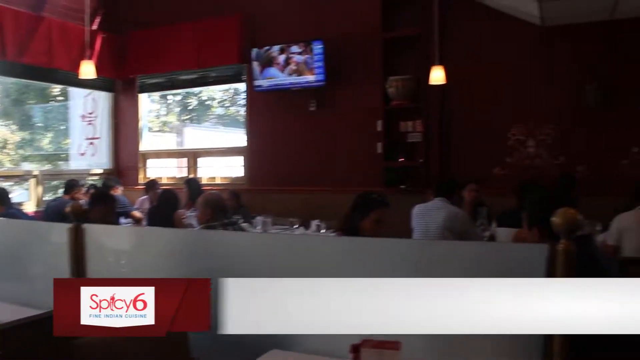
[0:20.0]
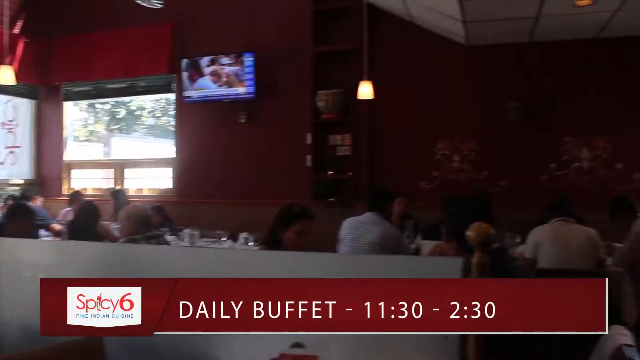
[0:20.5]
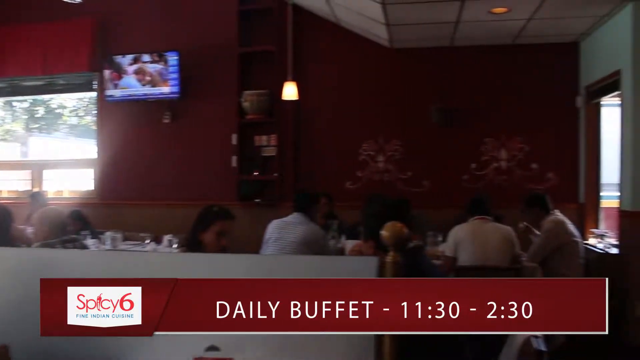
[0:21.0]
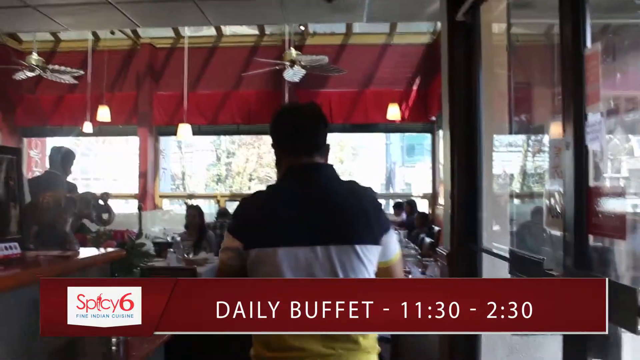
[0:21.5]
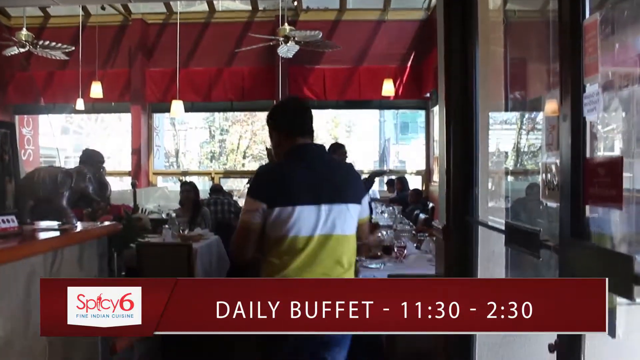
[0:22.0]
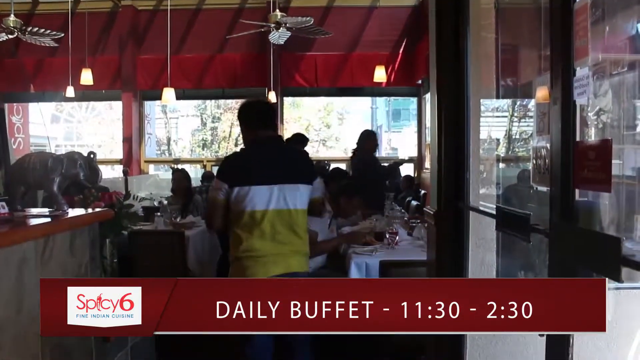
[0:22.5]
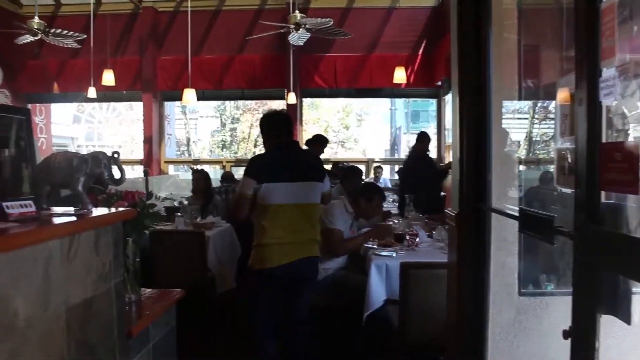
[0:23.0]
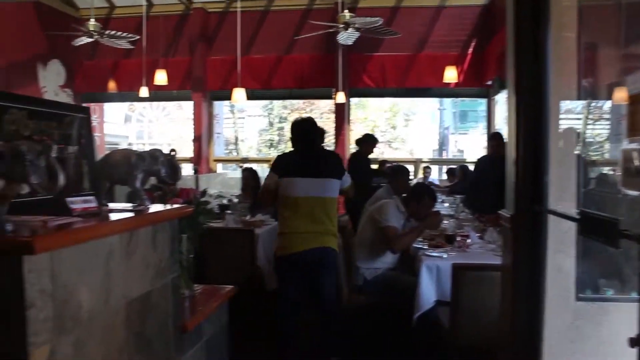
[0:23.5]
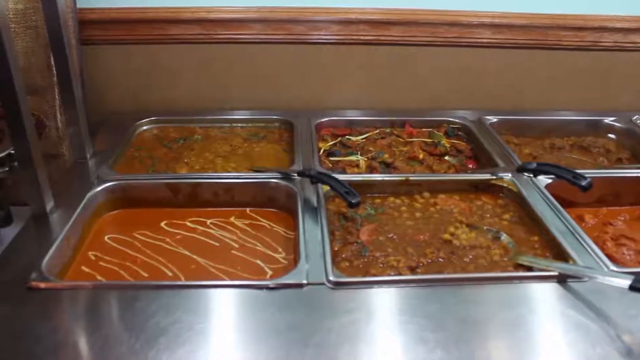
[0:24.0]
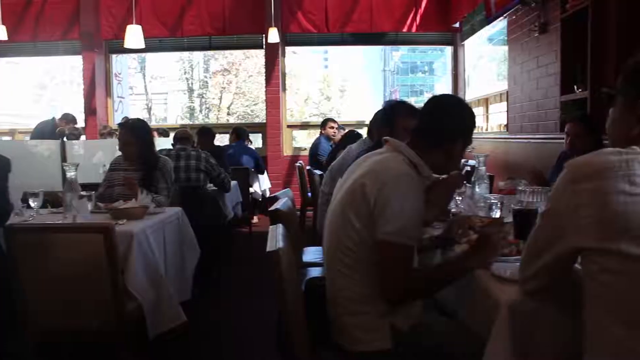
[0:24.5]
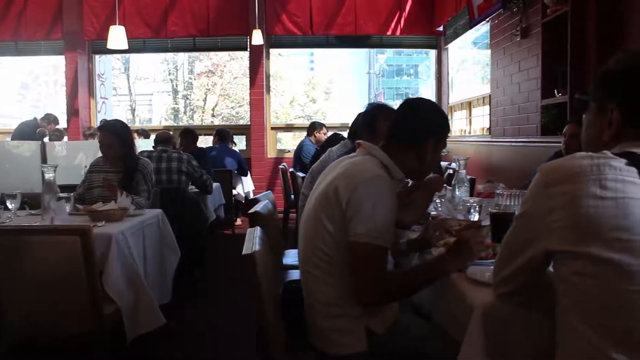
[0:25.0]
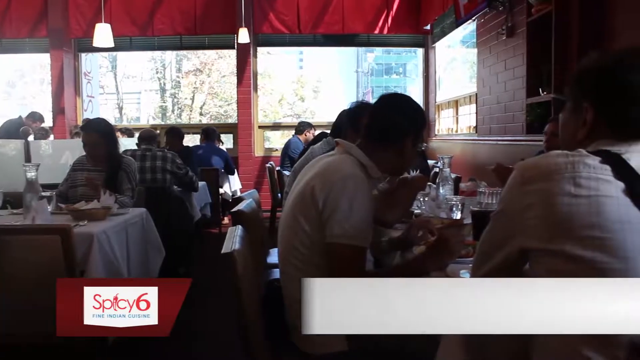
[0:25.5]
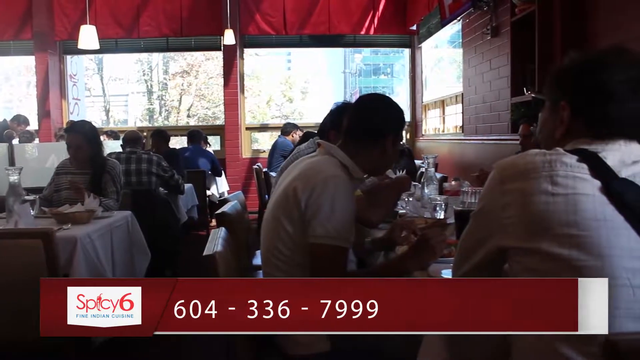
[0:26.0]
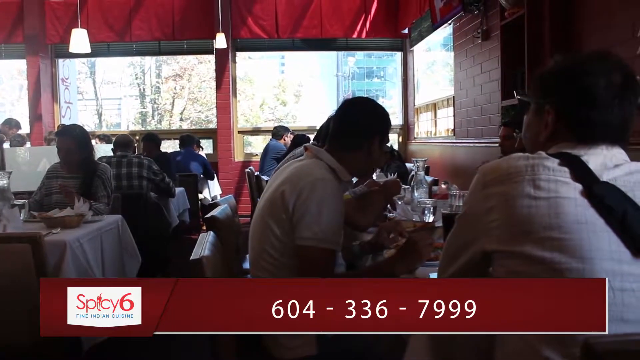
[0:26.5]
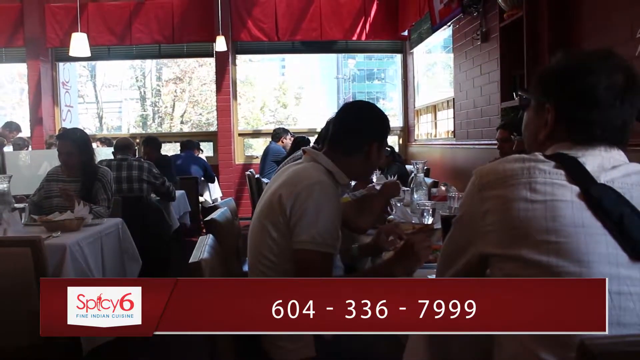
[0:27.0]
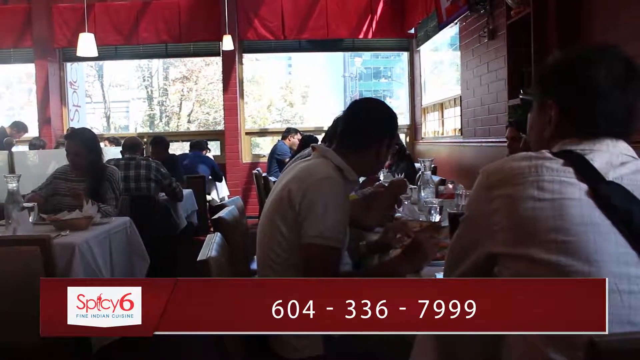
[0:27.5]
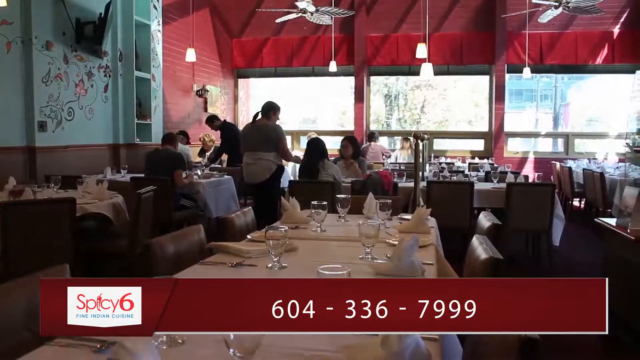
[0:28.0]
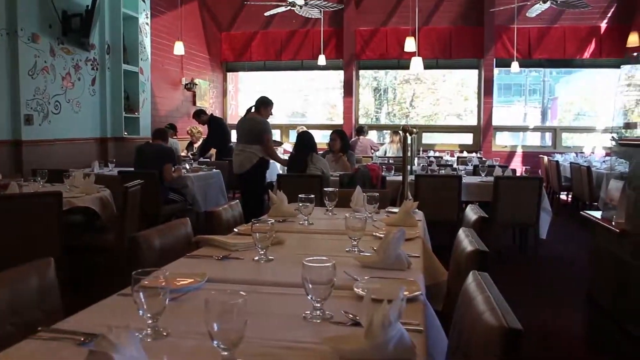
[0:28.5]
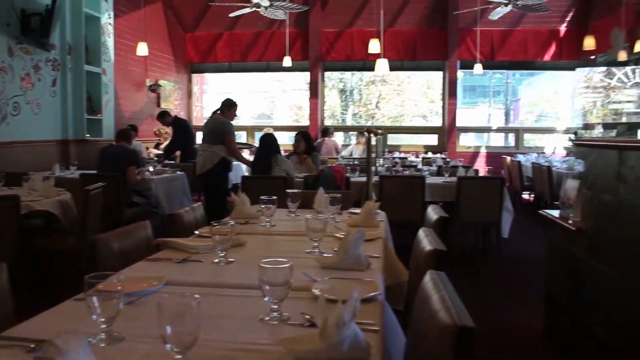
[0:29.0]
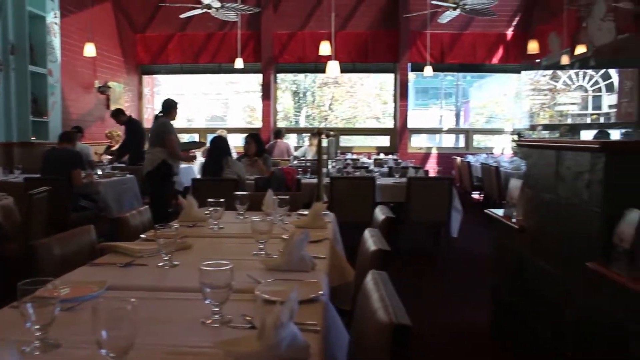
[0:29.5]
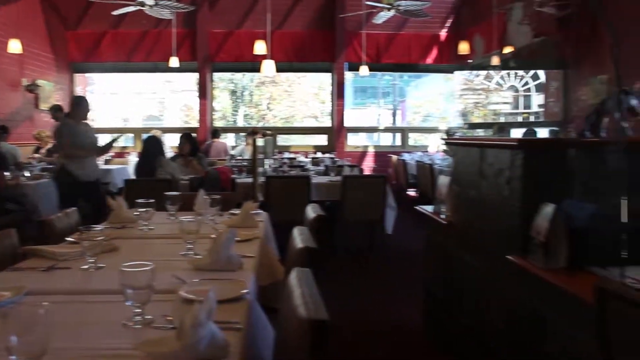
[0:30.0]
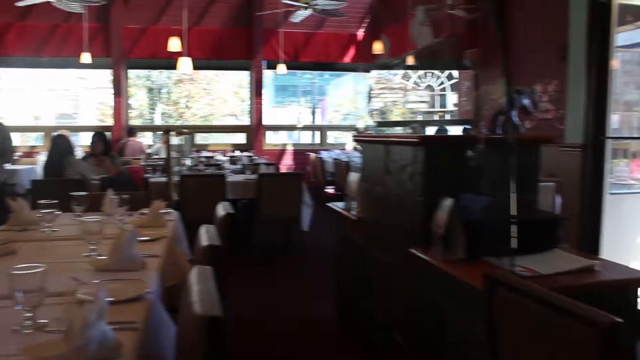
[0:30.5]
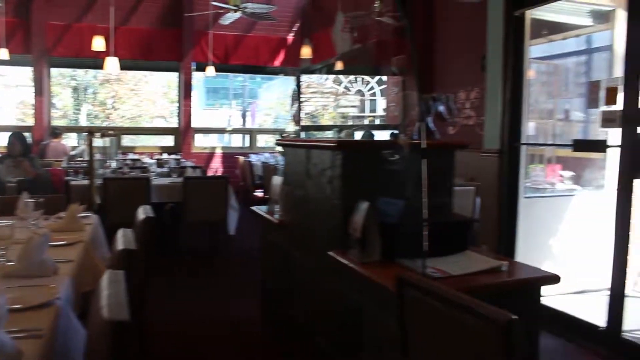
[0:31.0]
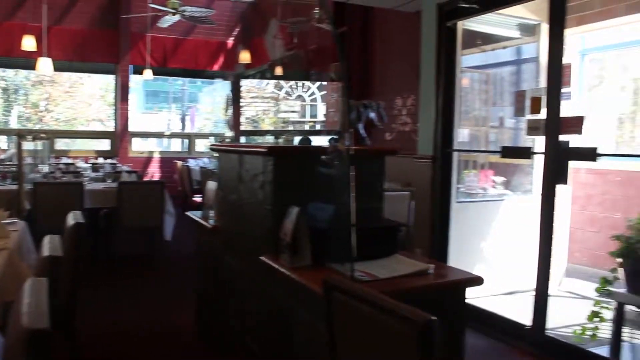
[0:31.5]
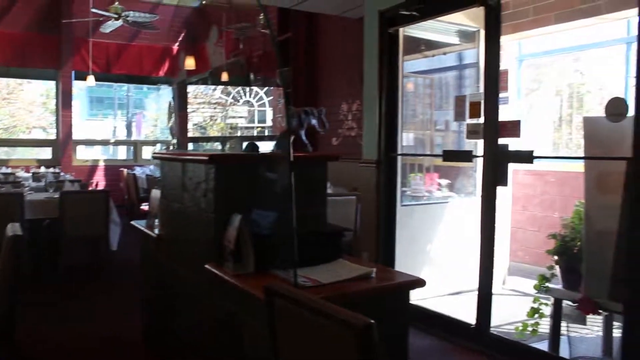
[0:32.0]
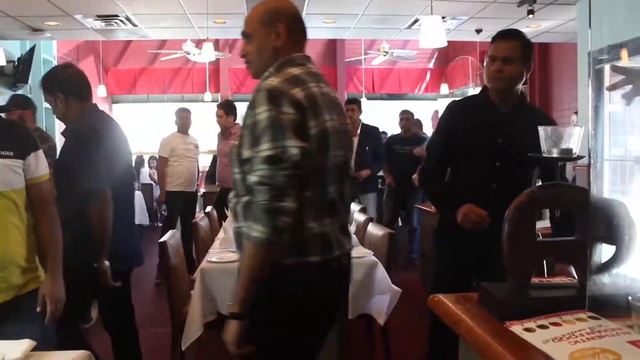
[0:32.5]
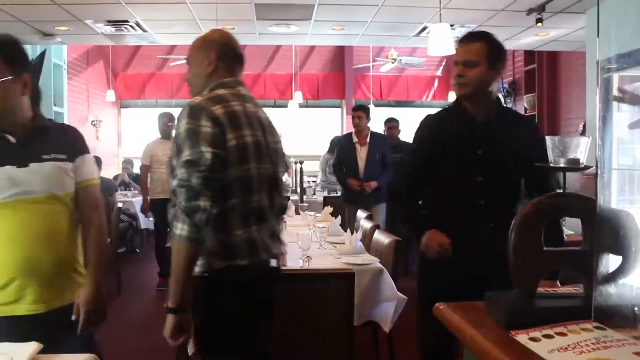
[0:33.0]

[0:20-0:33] Inside the restaurant, a bunch of people sit down. It is pretty dark inside. At the top center is a TV, and on the left side are some windows. A banner runs across the bottom; at first its right side is clear white, while its left side has a red section with a white square that says "Spicy Six." The white part of the banner is replaced with red, and white text comes up reading "Daily Buffet, 1130 to 1230." The camera pans toward the right. The people are then shown from another angle, looking straight at them, so some people sitting next to the windows are visible, and a couple of people are standing up. Ceiling fans hang down at the top. The video goes back to the section with food in the stainless steel containers, then back to the people sitting inside the restaurant. A banner comes up across the bottom, first white and then replaced with red, showing the numbers "604-336-7999" in white. The people eating are shown from another direction: the windows are now in the back, and on the left side is a tall red and white wall with shelving in it. Right in the center is a big, empty table with nobody around it, set with a white tablecloth, plates, utensils, and glasses. The camera pans toward the right until the glass front door is visible. The video then returns to the inside, where everybody is standing up and walking around.